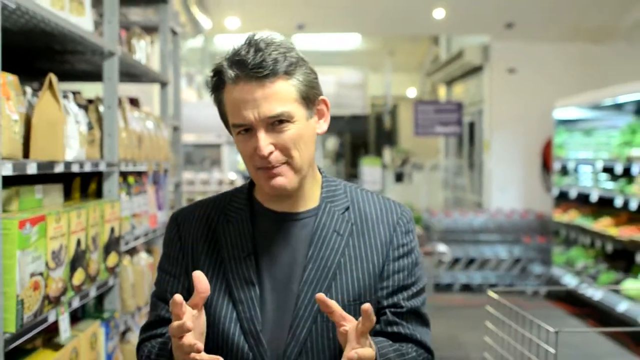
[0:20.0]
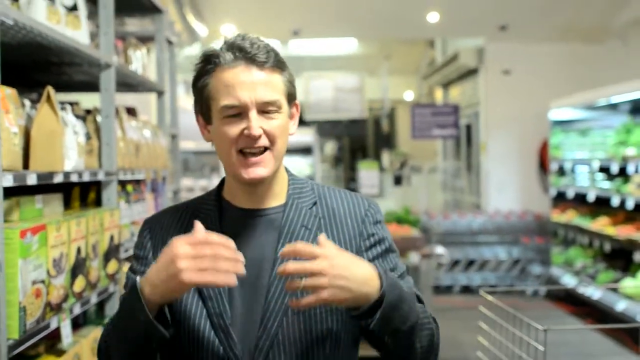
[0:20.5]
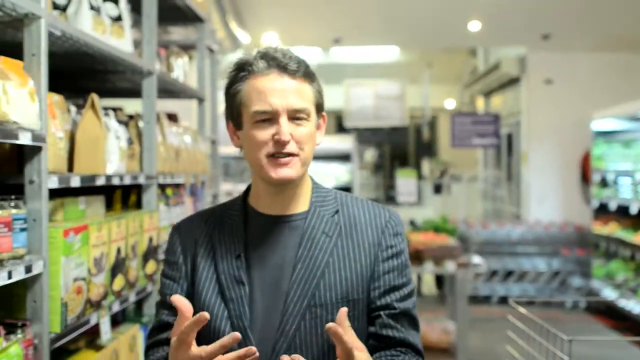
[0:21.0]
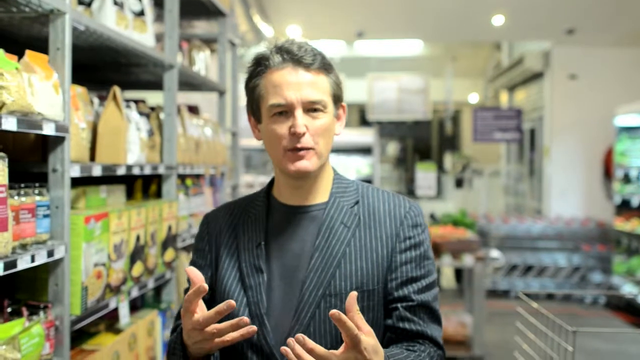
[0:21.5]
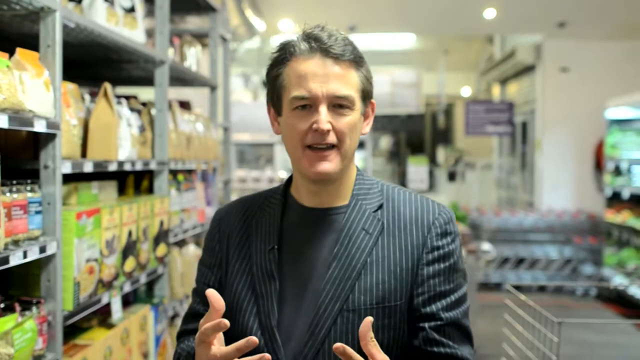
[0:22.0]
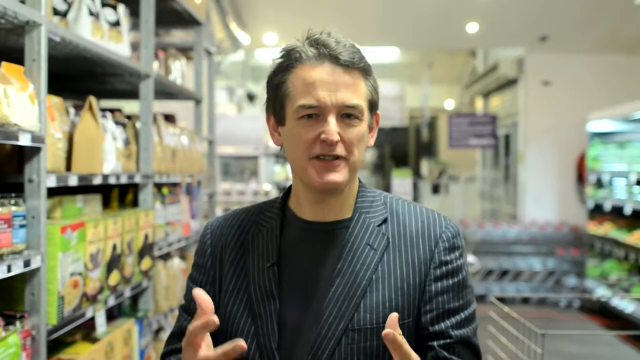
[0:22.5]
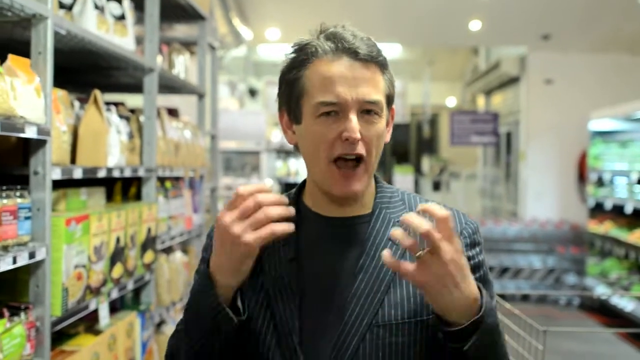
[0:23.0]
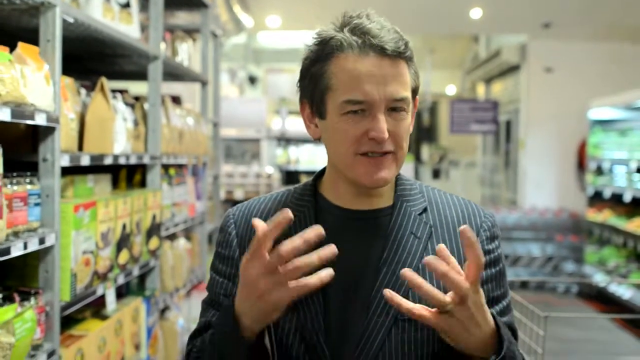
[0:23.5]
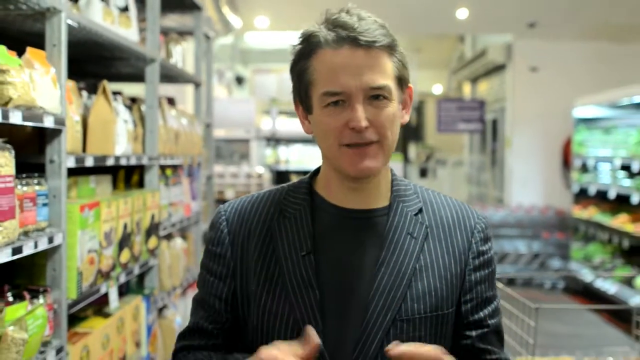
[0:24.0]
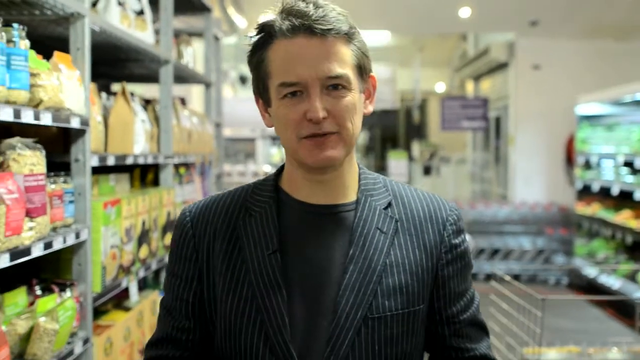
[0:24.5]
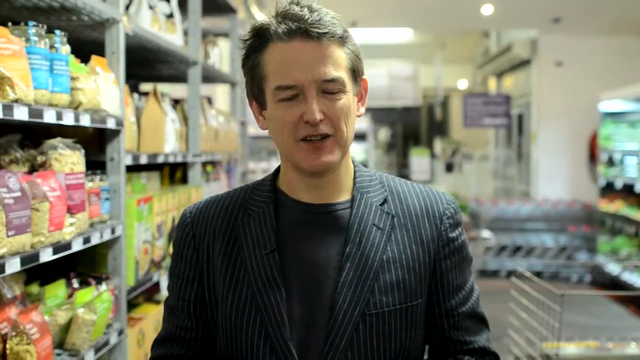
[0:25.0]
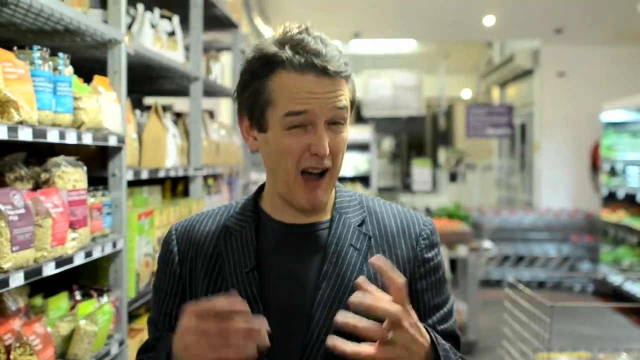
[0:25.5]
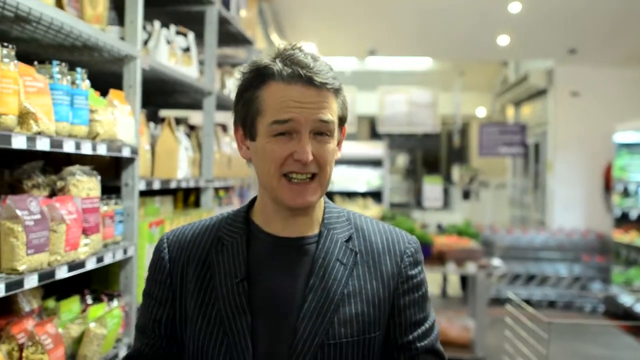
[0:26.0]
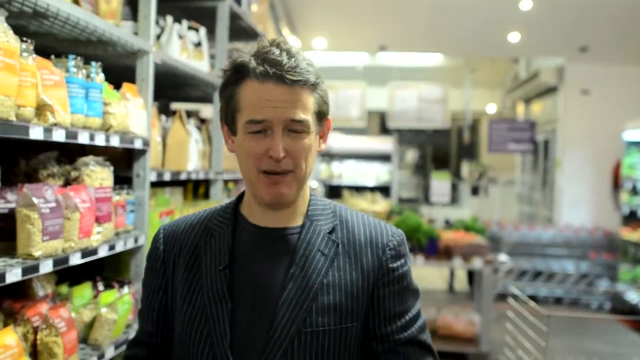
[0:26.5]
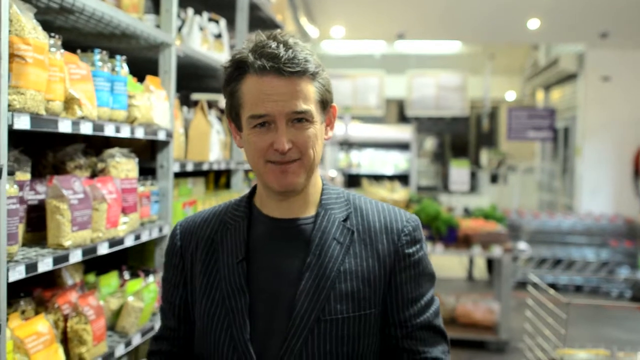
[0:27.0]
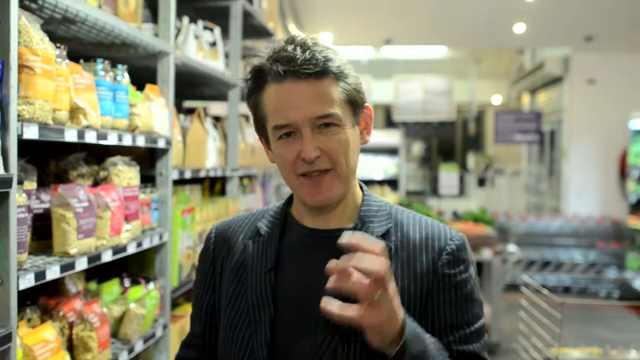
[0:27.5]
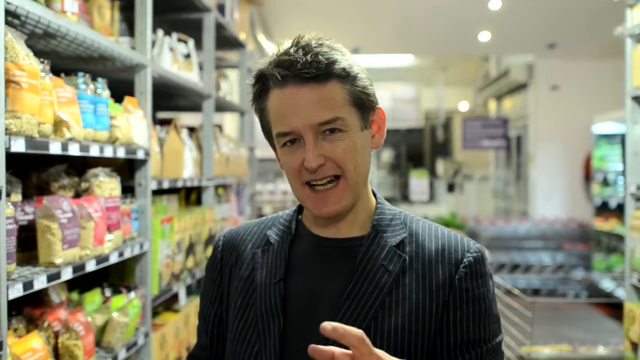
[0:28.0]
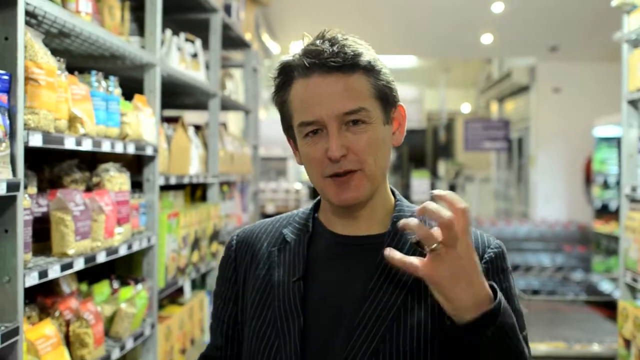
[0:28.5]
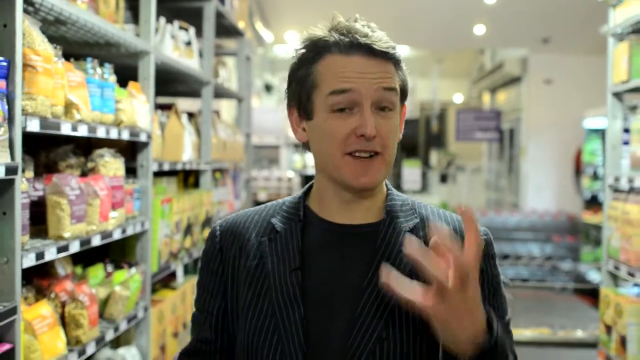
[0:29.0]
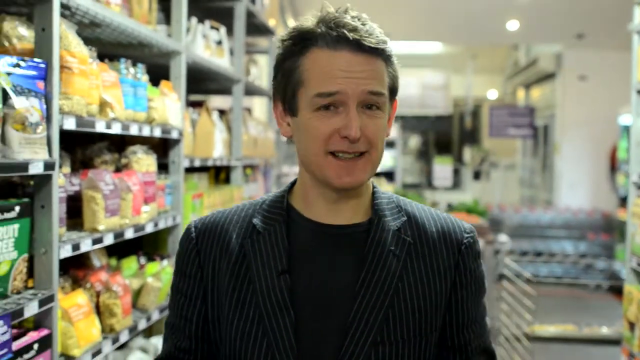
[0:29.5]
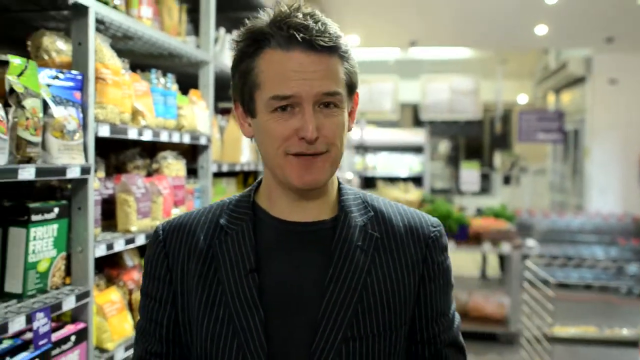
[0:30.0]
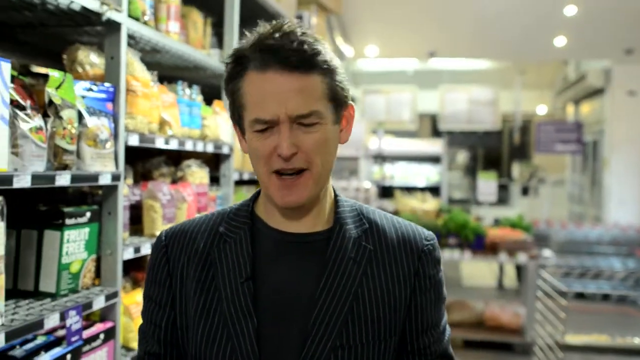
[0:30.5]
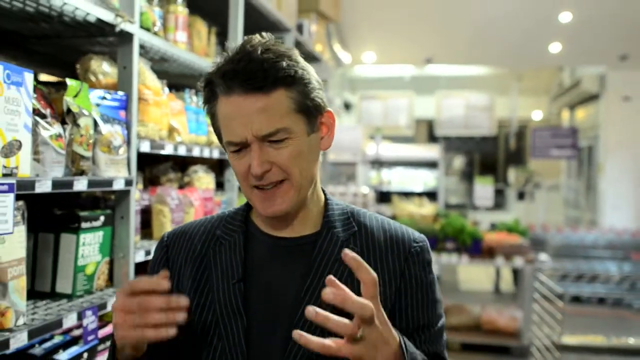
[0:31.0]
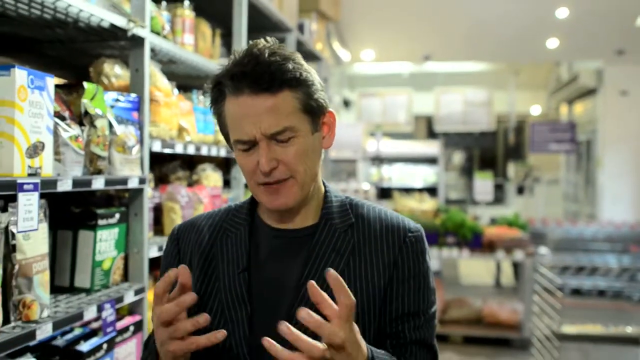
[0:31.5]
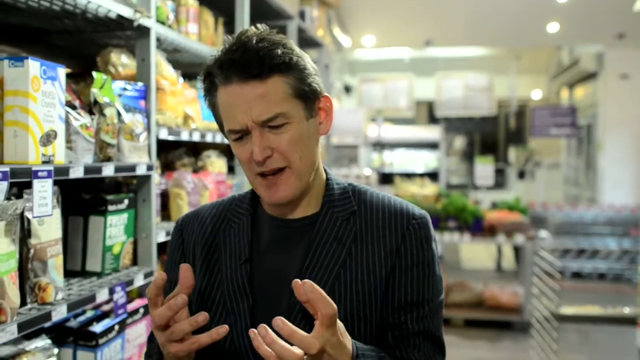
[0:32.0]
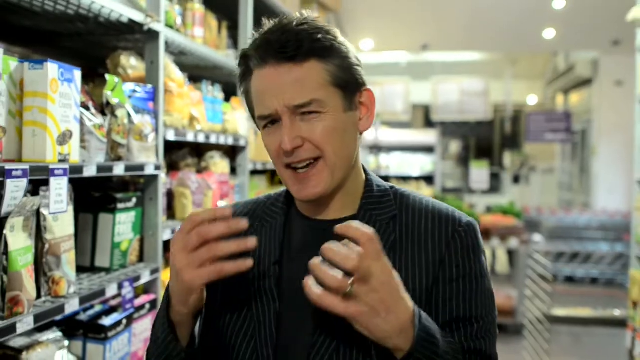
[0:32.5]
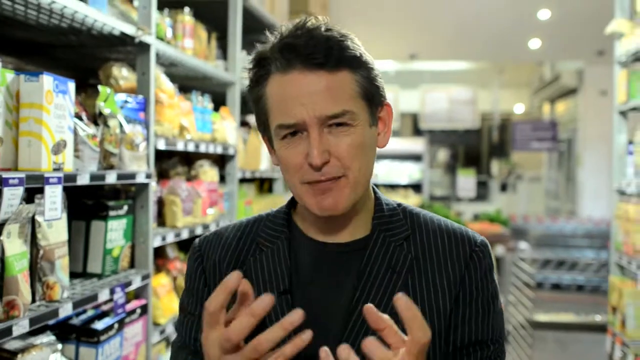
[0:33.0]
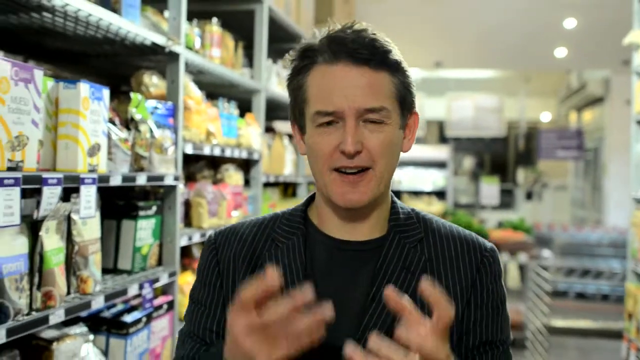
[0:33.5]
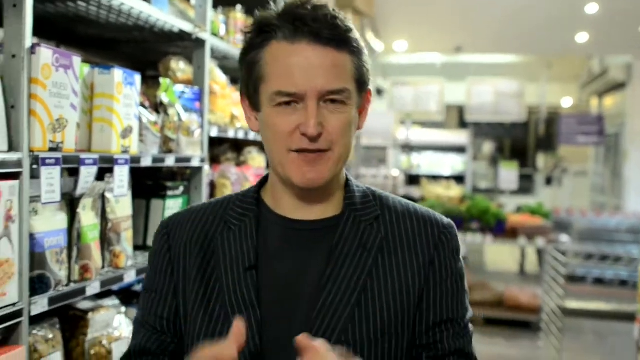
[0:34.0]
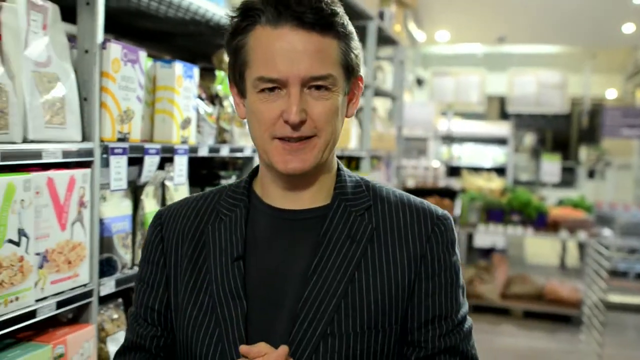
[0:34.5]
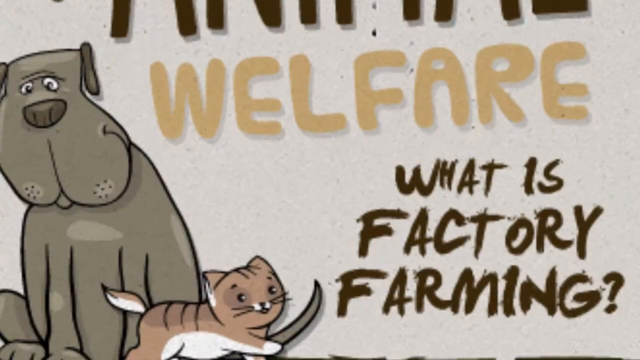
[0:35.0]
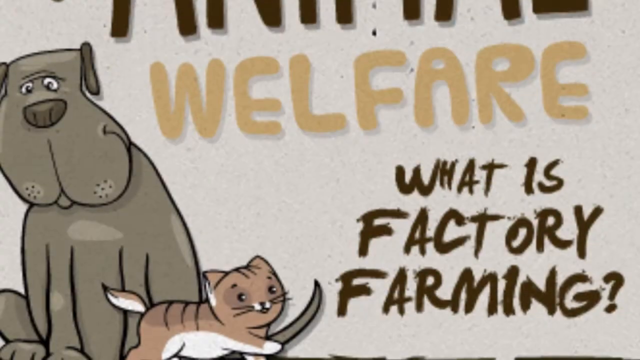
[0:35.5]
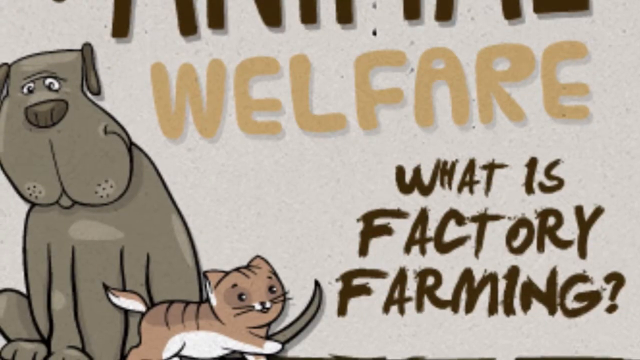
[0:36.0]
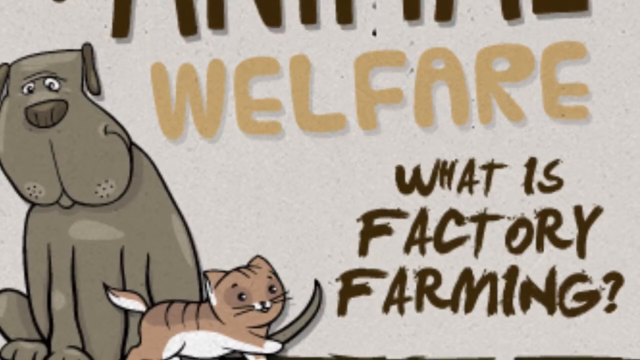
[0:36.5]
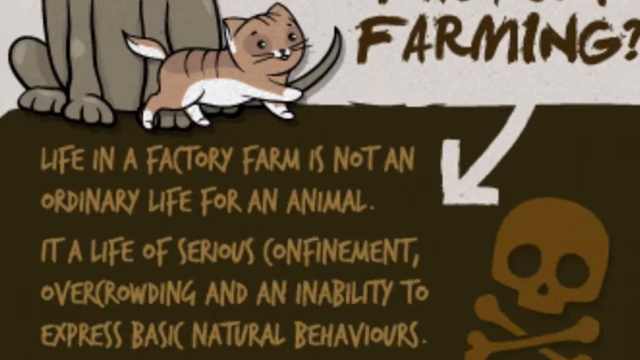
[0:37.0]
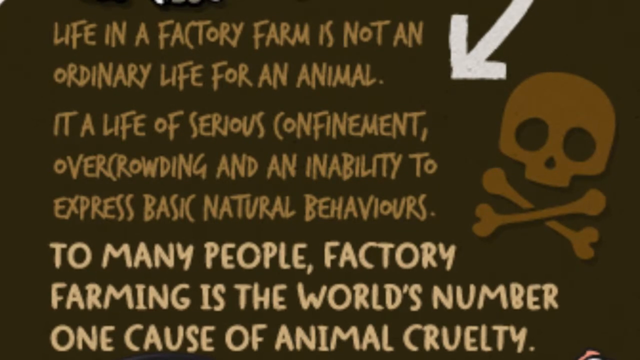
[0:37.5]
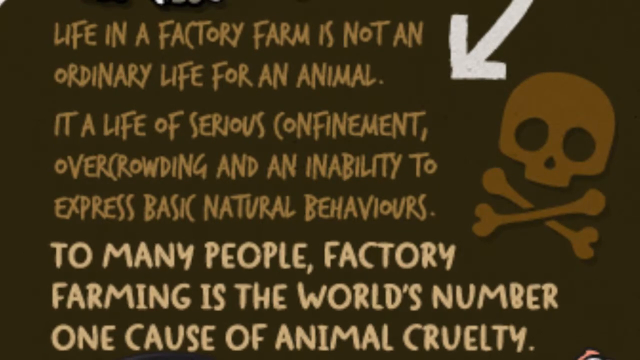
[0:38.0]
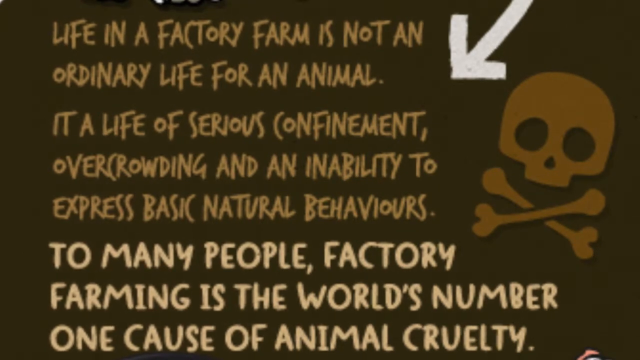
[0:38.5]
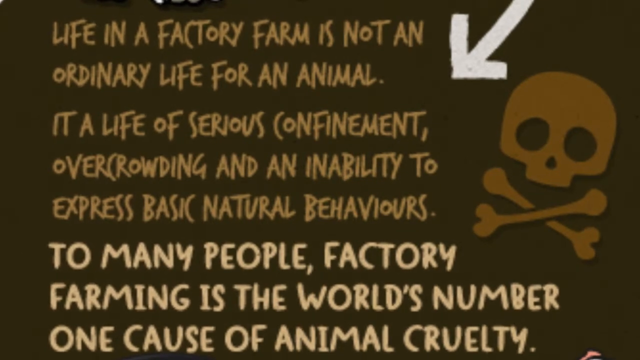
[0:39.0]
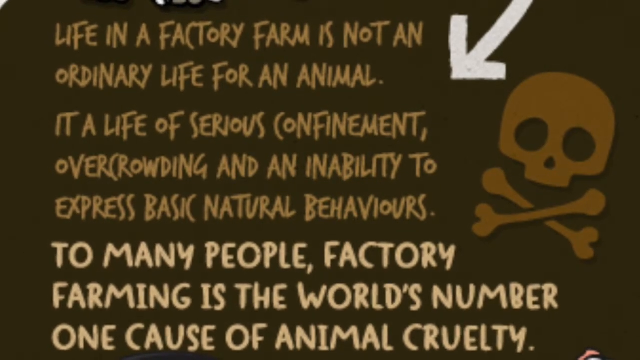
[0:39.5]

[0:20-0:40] The host, wearing a black and white striped blazer and a black shirt, makes big motions with his hands as he talks directly to the camera. There are shelves of groceries to his left, and to his right appears to be the produce. As he slowly walks forward through the aisle, a shelf appears on his right side. He keeps making grand motions with both hands, putting his hands in front of him and curling them almost into a fist. The screen then transitions to a poster showing a large grey dog with a small orange cat next to him on the bottom right. The cat has black stripes on its head and back and a white patch of fur under its tail. The words on the poster say "animal welfare, what is factory farming".